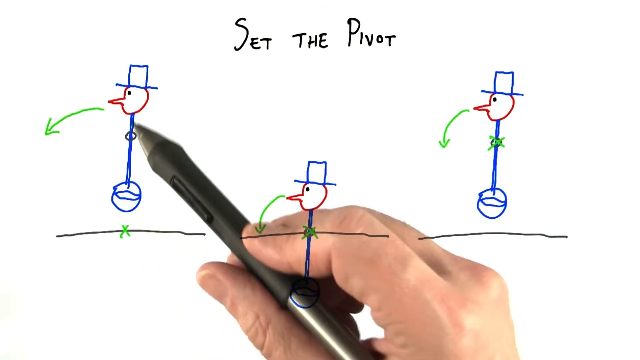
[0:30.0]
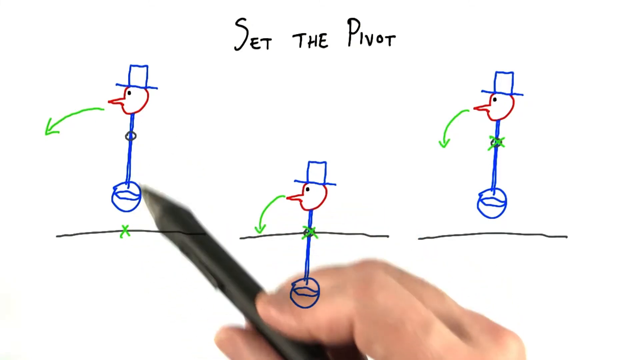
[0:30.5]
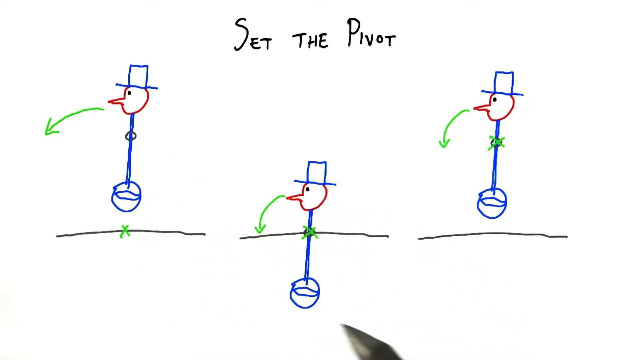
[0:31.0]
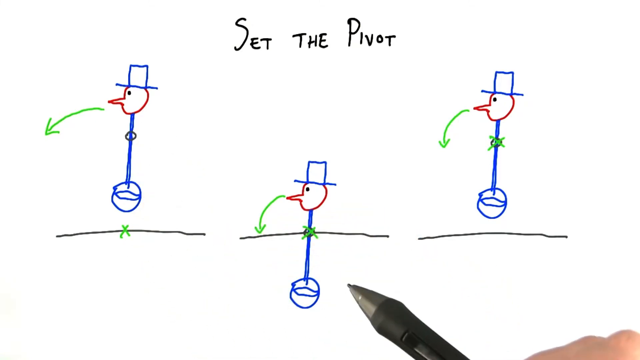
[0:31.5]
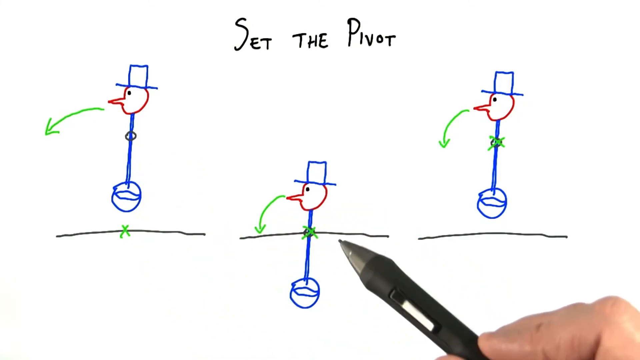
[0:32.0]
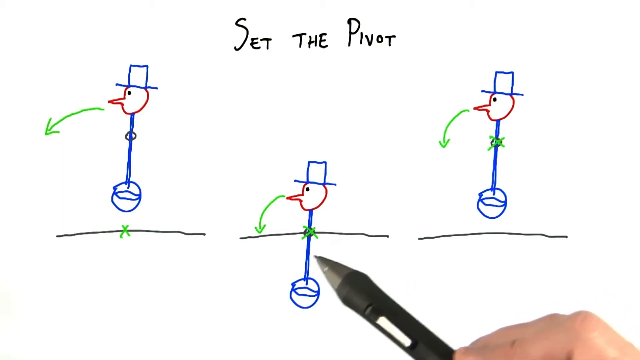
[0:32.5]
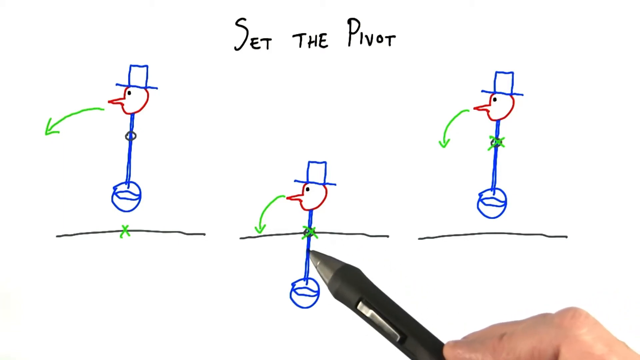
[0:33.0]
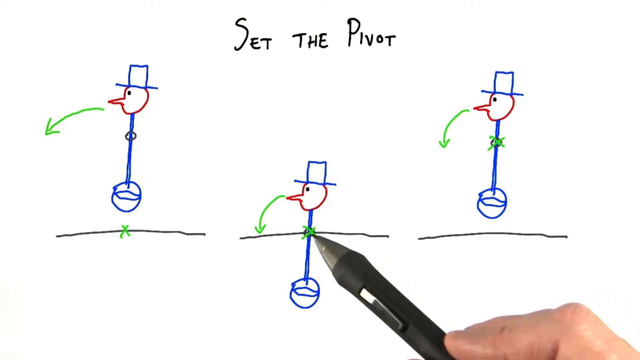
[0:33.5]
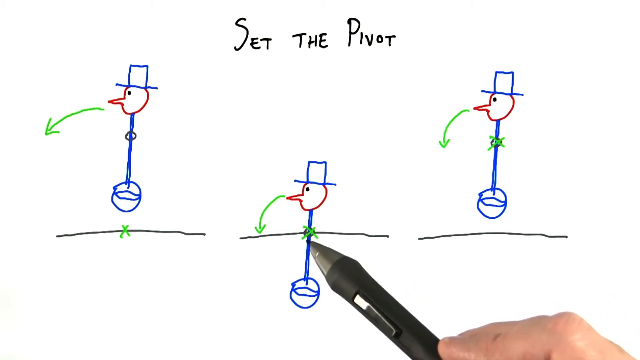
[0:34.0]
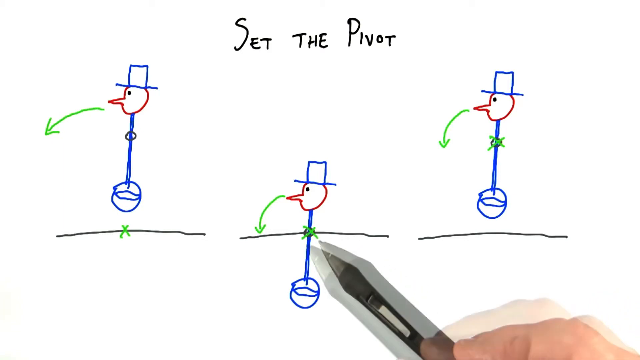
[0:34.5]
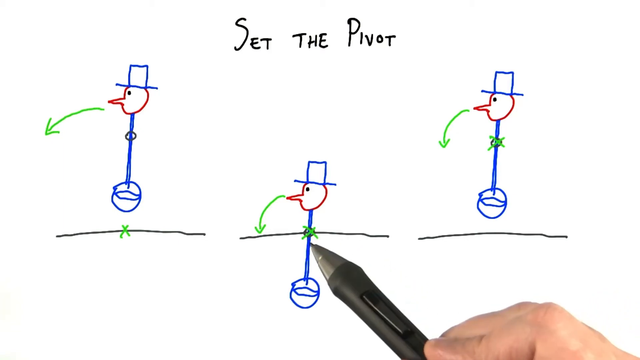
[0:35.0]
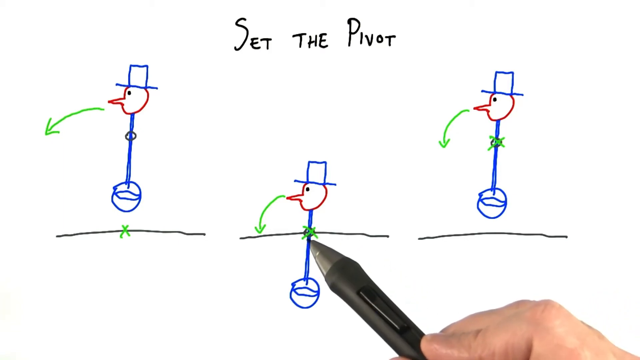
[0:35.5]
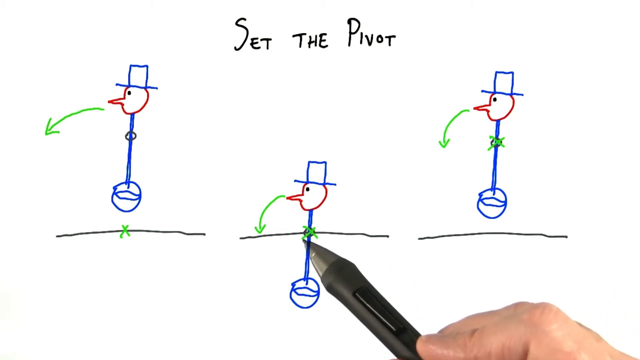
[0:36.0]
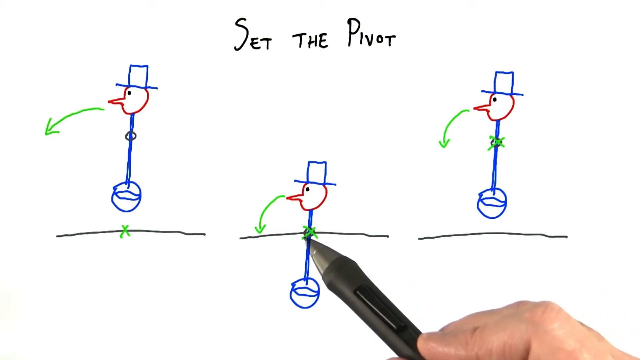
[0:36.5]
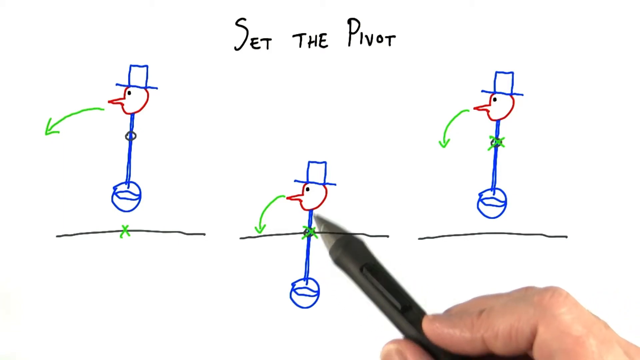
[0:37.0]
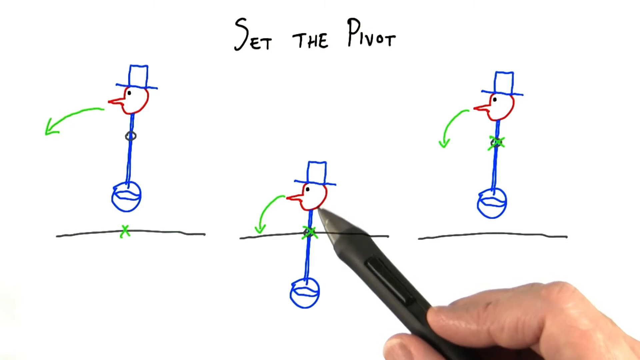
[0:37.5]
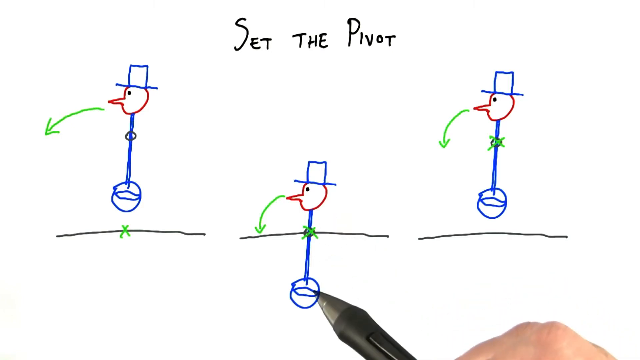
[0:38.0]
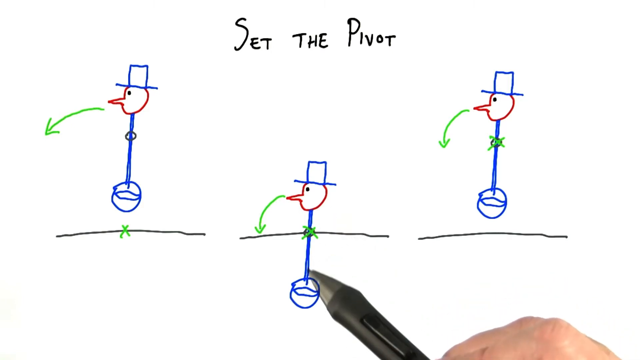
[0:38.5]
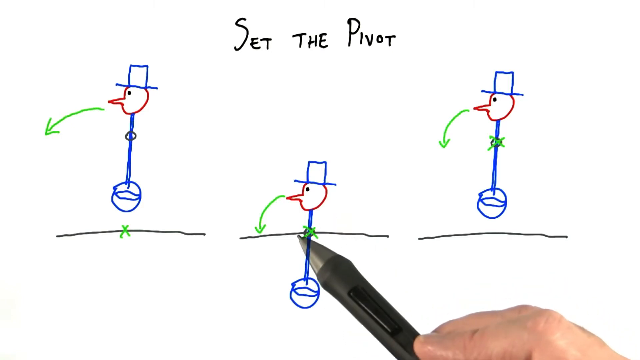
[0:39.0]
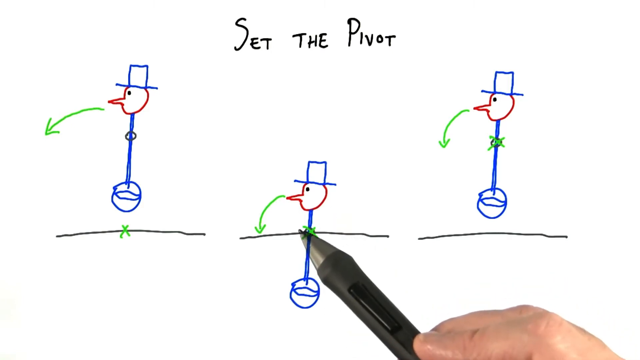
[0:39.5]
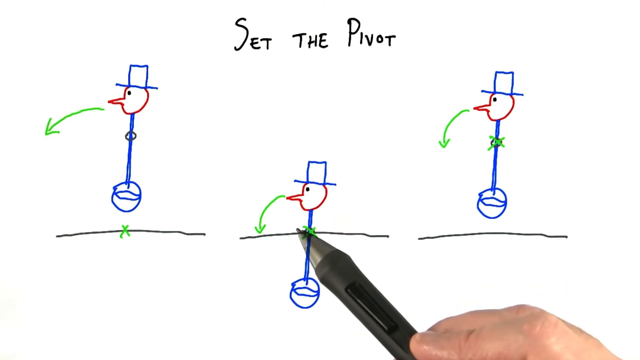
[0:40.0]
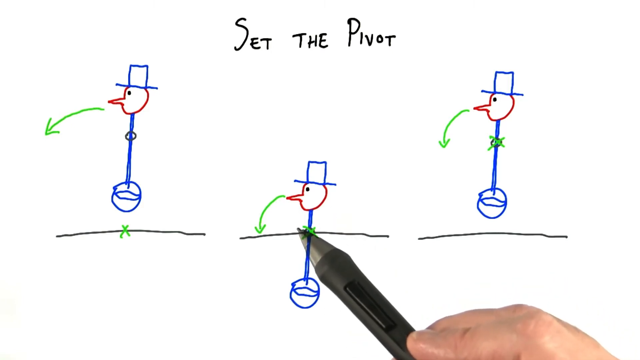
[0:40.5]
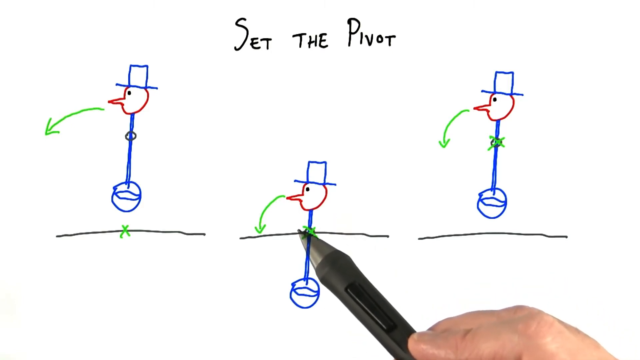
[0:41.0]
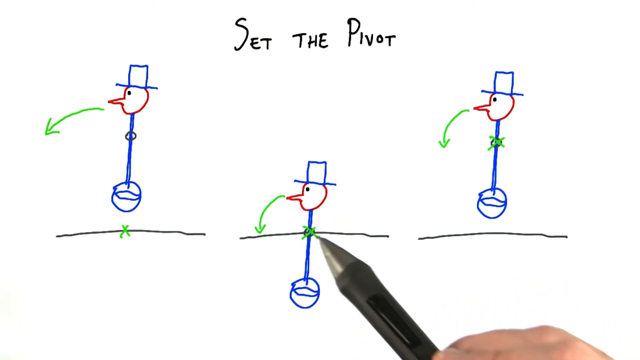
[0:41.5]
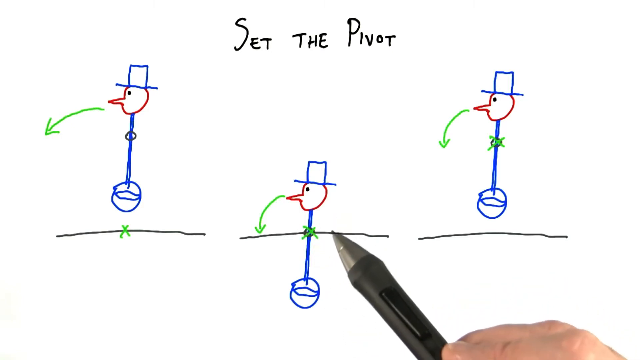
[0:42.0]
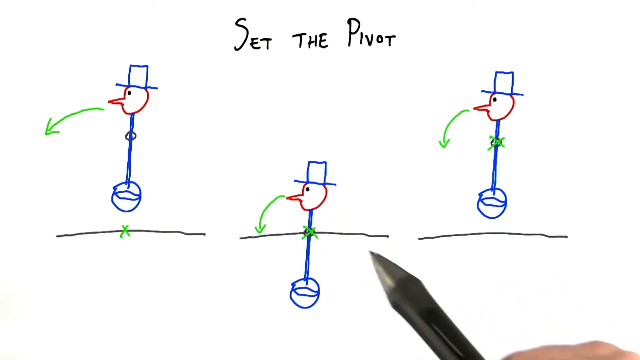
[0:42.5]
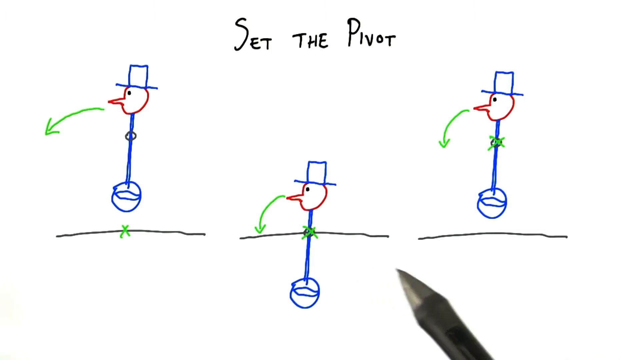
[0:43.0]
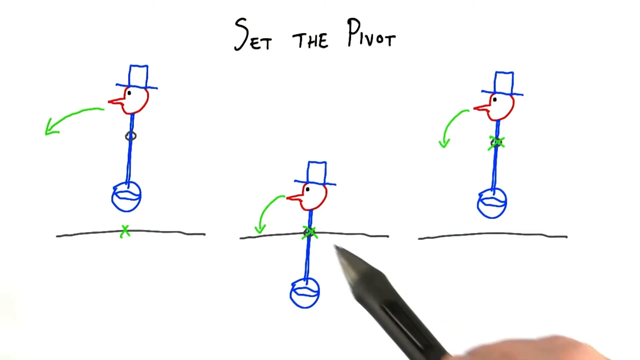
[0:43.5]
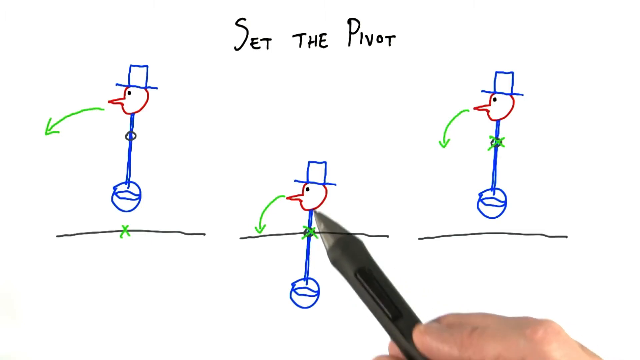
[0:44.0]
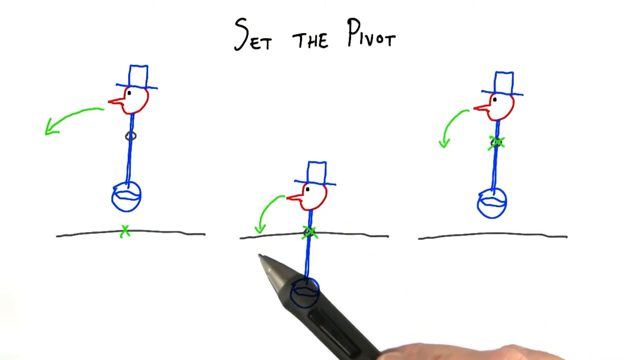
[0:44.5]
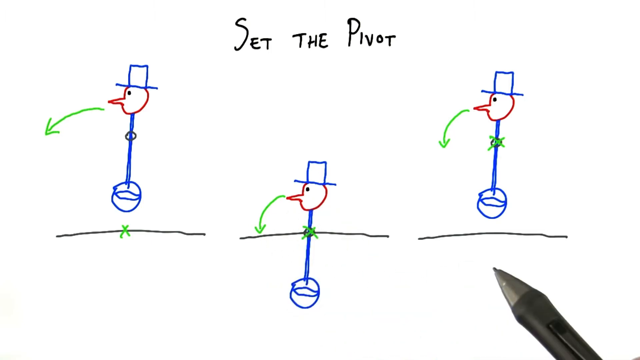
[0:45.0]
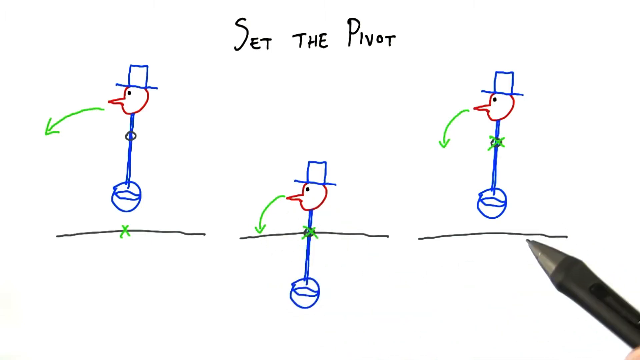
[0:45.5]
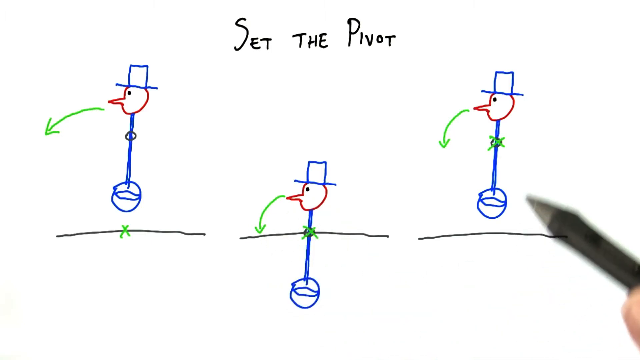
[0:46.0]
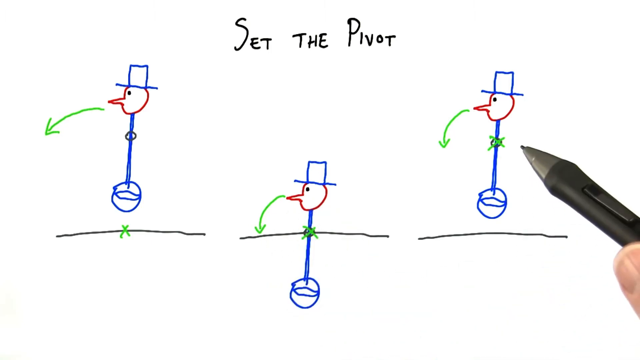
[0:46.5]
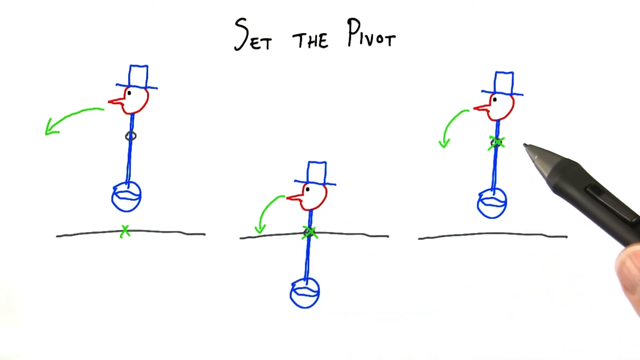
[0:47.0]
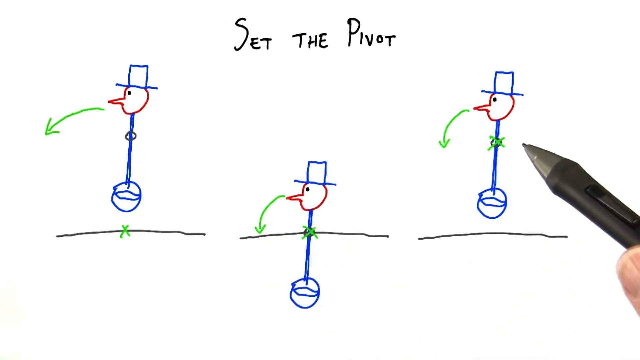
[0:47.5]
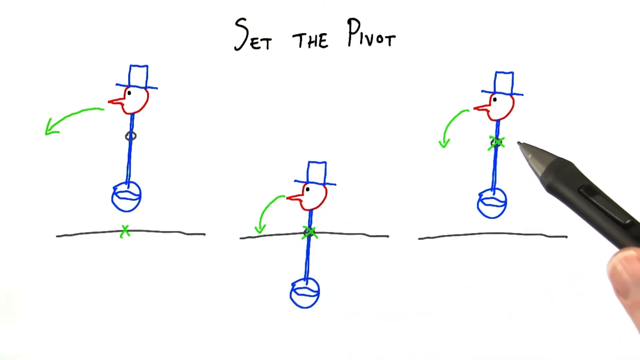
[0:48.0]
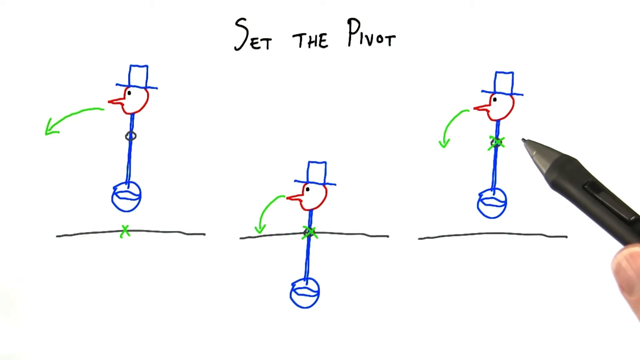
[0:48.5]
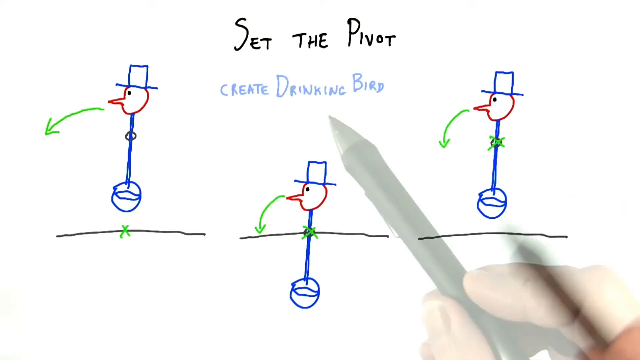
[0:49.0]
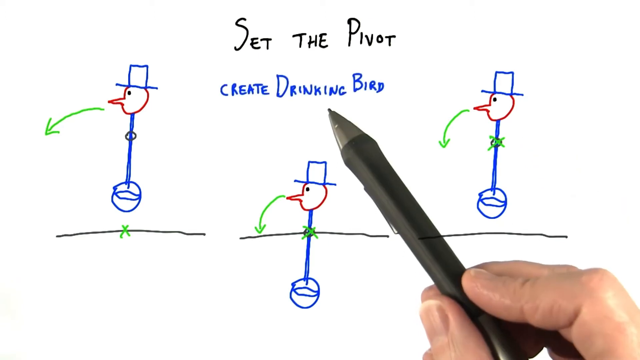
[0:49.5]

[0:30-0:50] The three stickmen remain in the same positions: the middle one has a black line across what appears to be its chest, while the other two have the black line right at the bottom of the drawing. The pen seems to hover and point at an X marked on the middle stickman, and the user keeps pointing where the black line meets that stickman's chest. He also points at the stickman on the far right, to the right of the middle one, and then writes "create drinking bed".